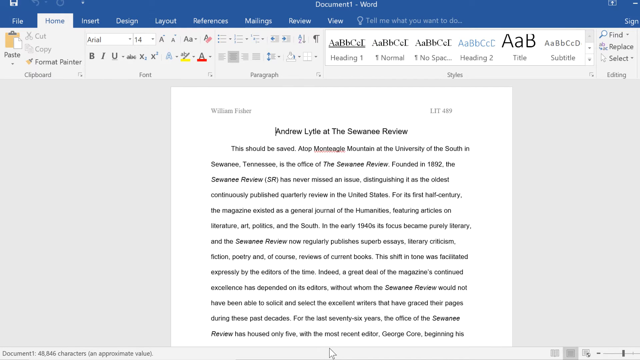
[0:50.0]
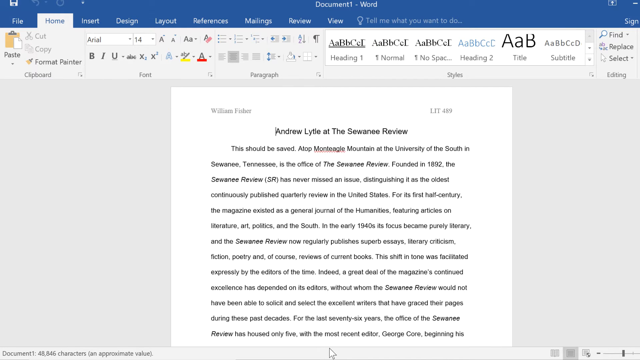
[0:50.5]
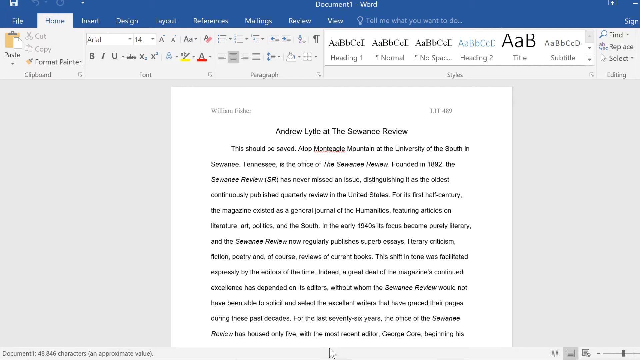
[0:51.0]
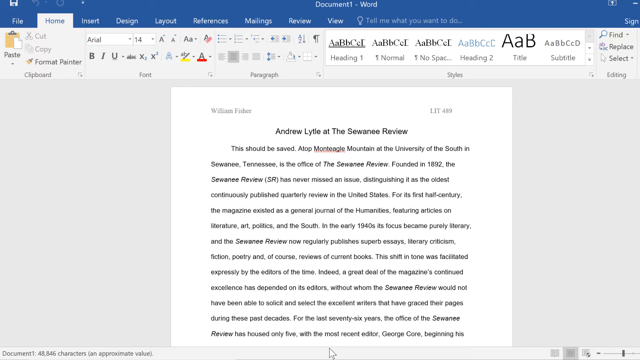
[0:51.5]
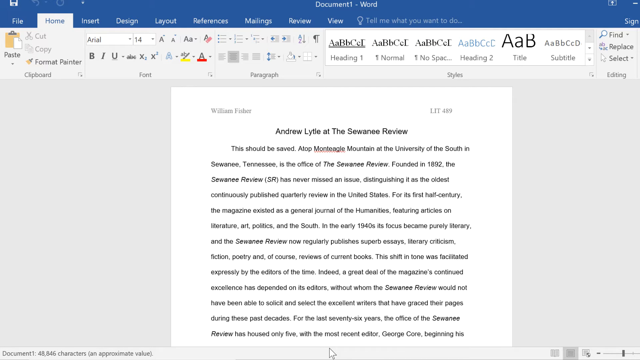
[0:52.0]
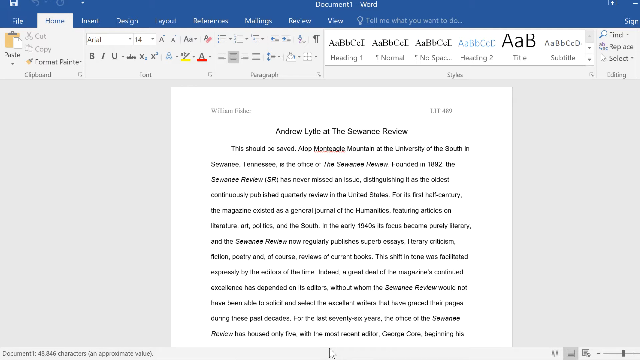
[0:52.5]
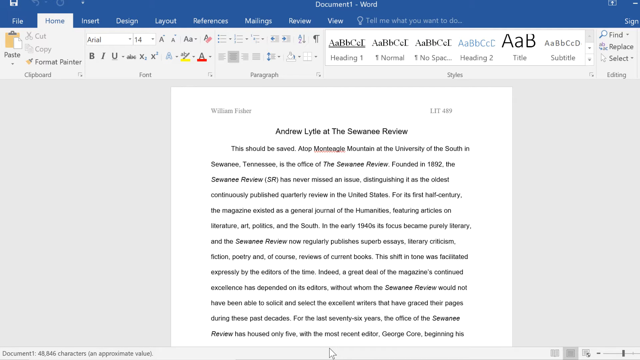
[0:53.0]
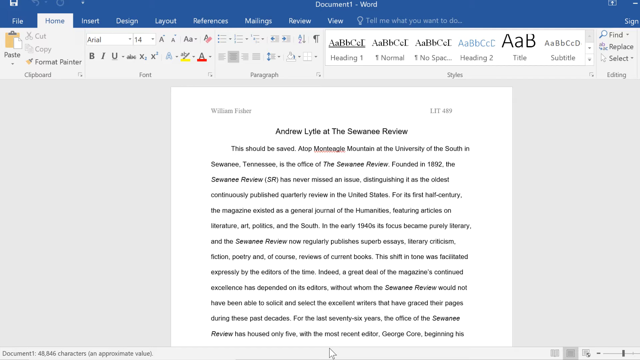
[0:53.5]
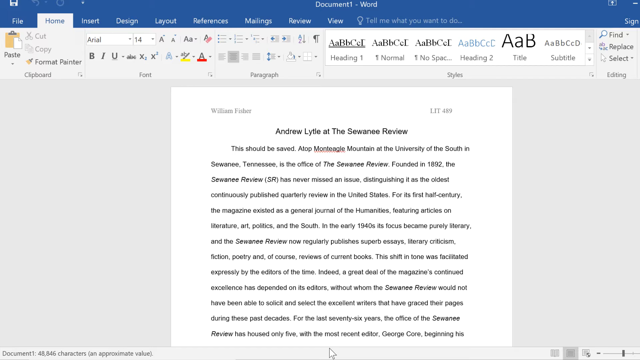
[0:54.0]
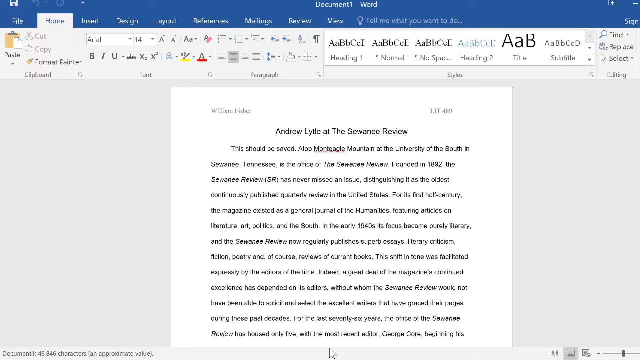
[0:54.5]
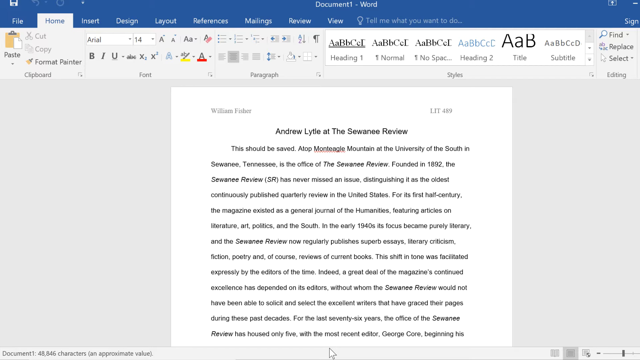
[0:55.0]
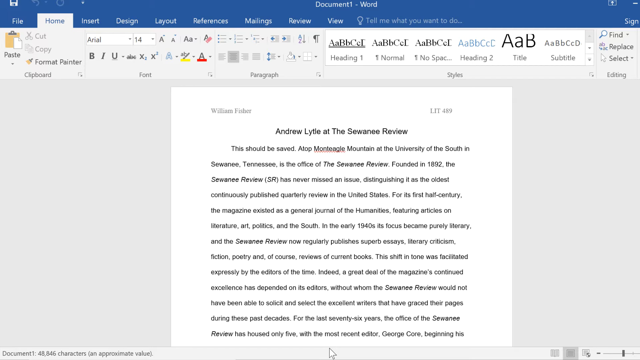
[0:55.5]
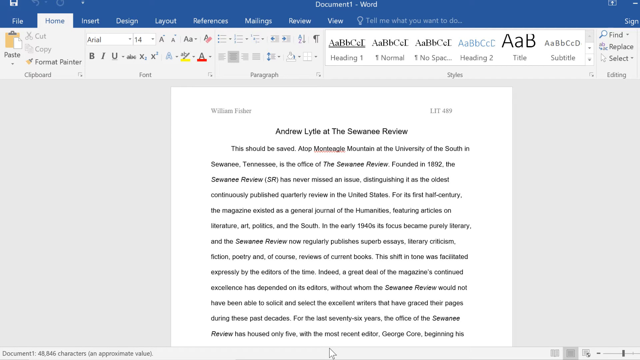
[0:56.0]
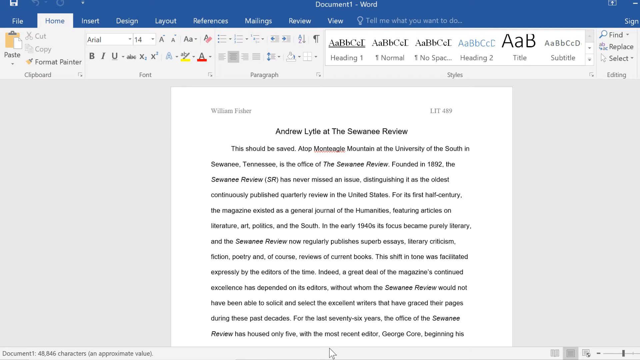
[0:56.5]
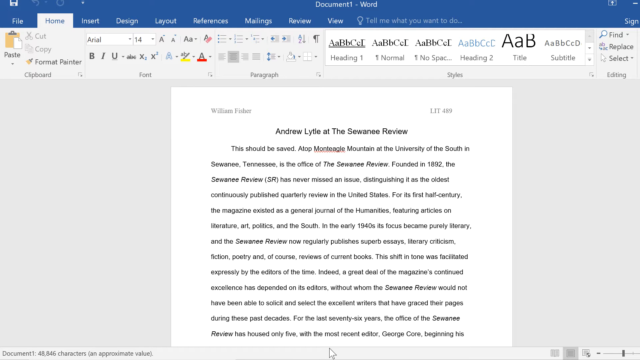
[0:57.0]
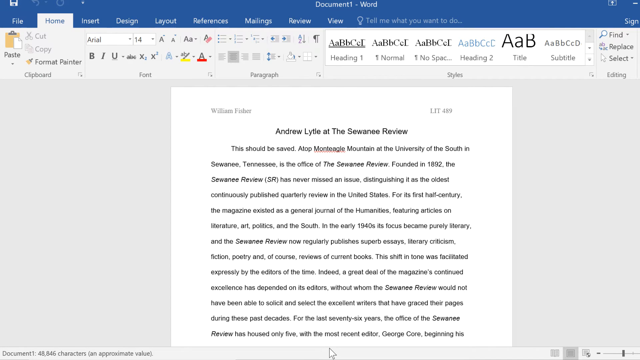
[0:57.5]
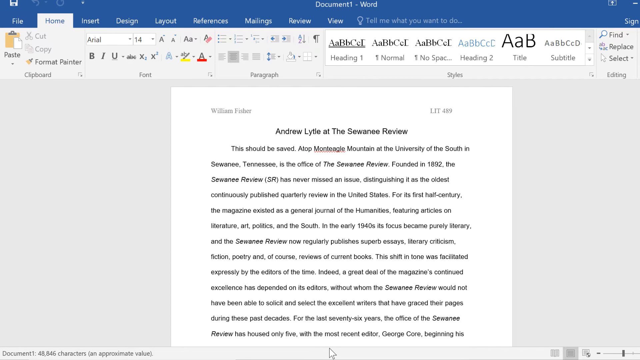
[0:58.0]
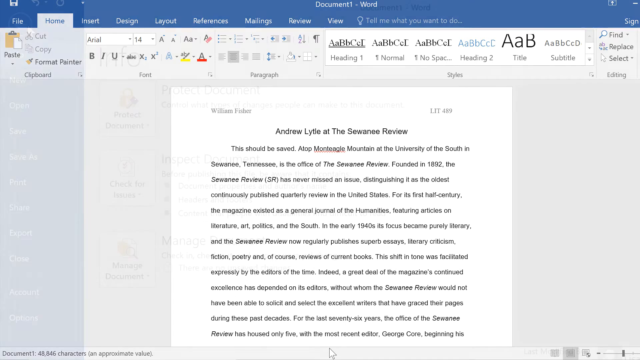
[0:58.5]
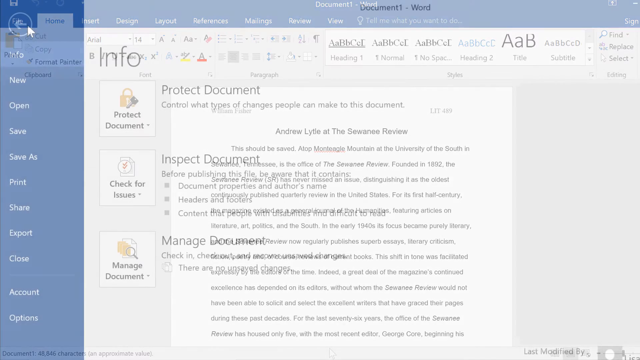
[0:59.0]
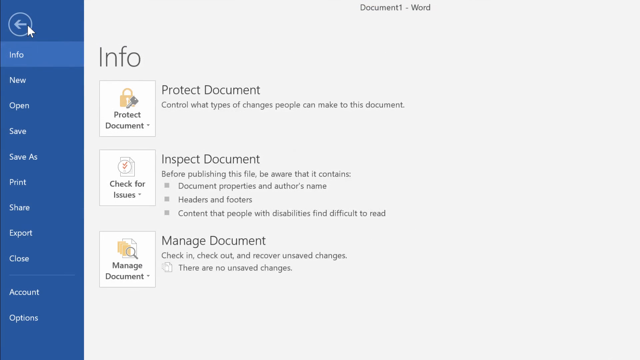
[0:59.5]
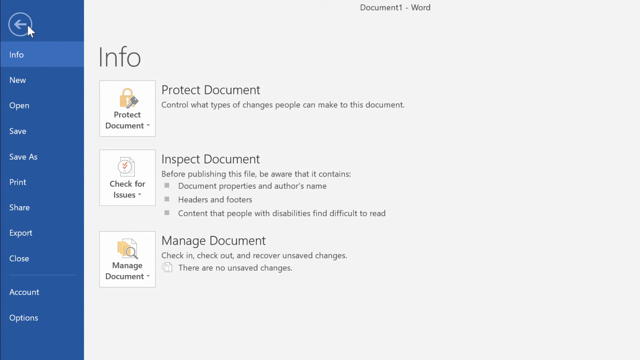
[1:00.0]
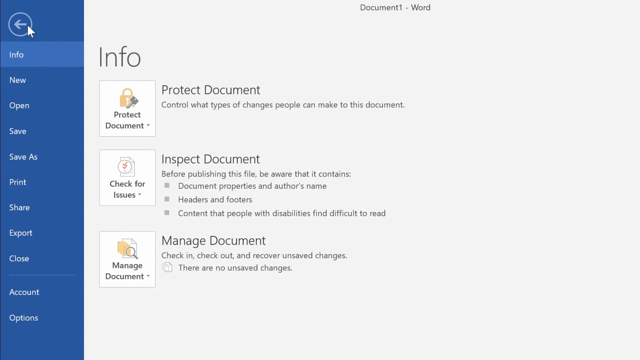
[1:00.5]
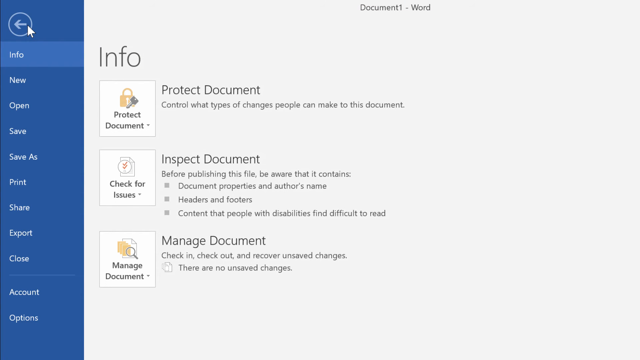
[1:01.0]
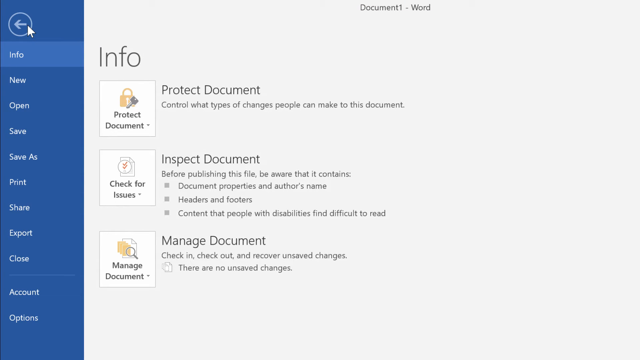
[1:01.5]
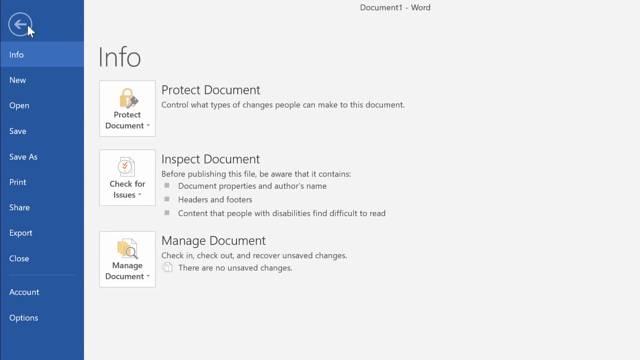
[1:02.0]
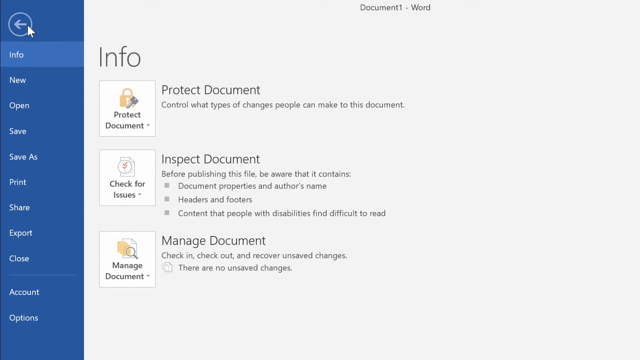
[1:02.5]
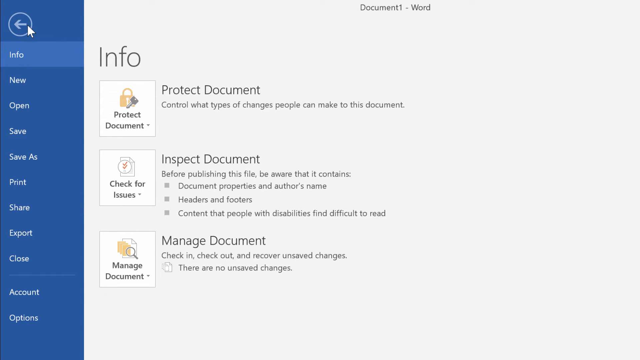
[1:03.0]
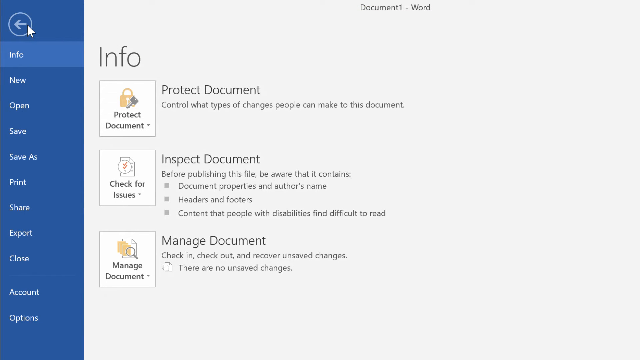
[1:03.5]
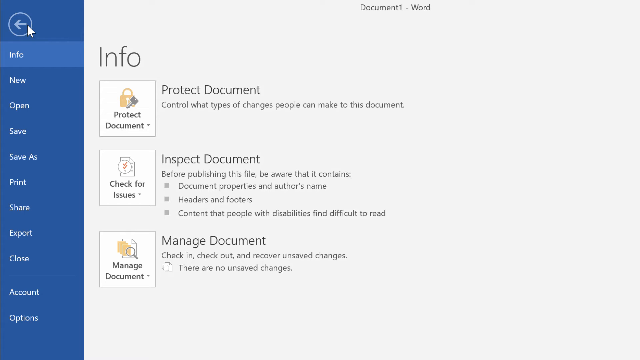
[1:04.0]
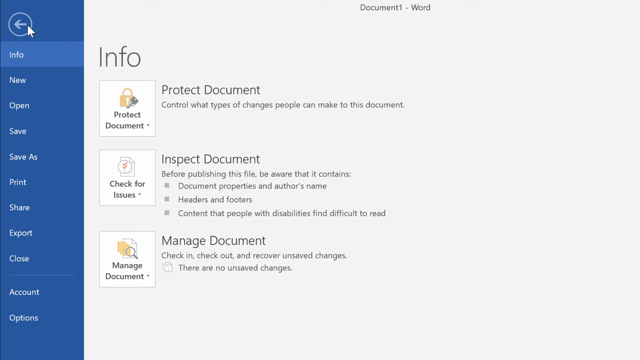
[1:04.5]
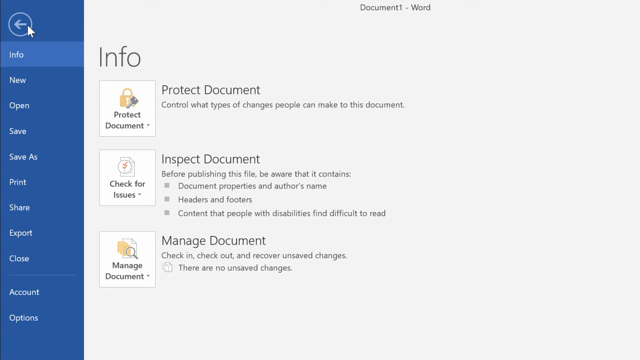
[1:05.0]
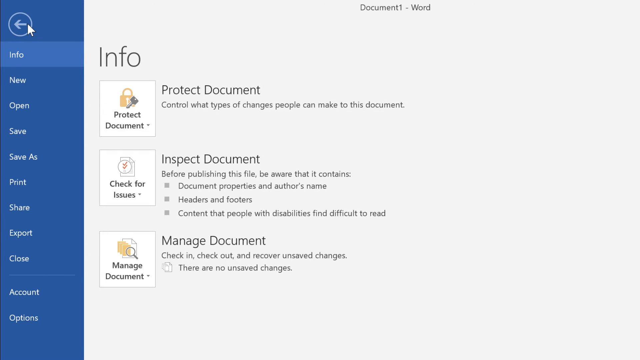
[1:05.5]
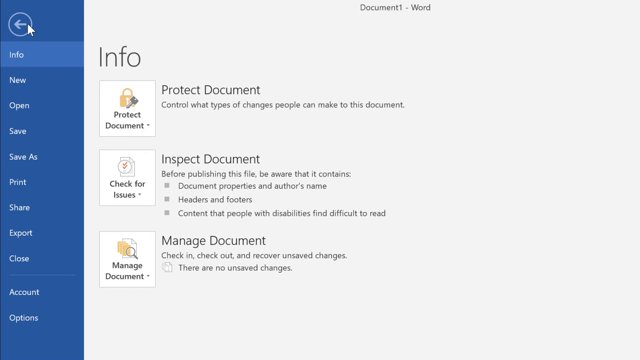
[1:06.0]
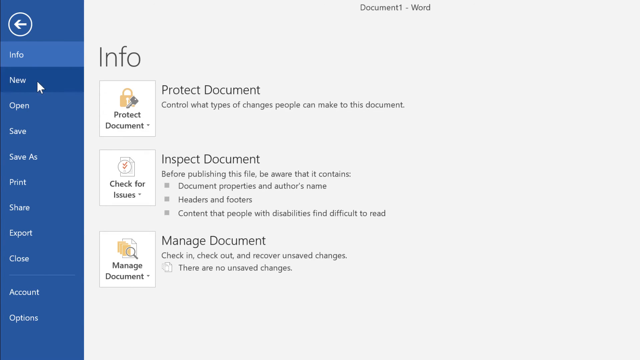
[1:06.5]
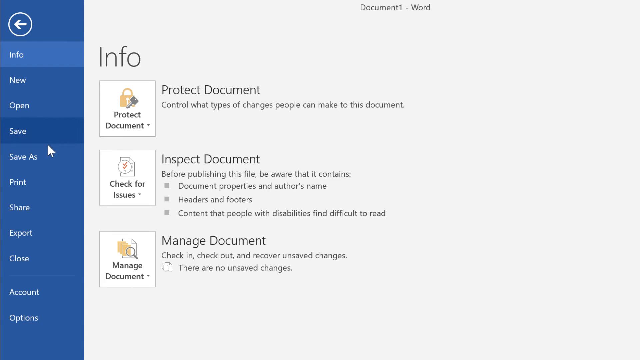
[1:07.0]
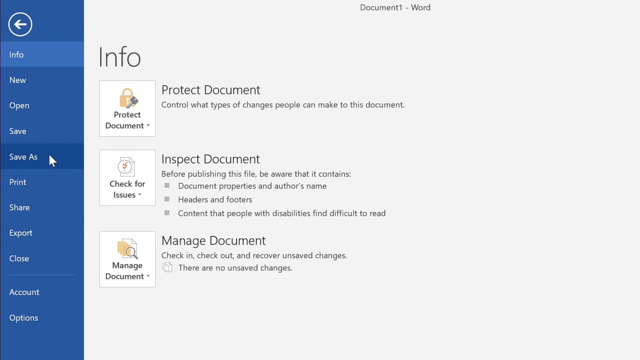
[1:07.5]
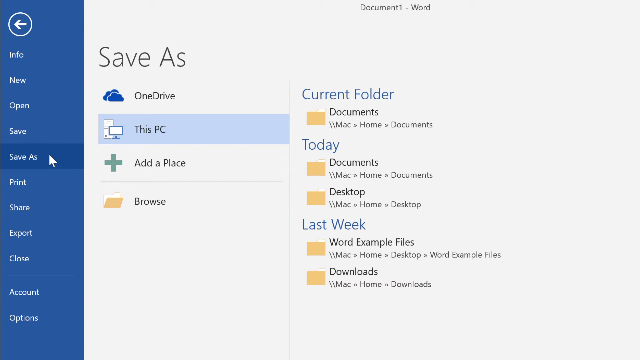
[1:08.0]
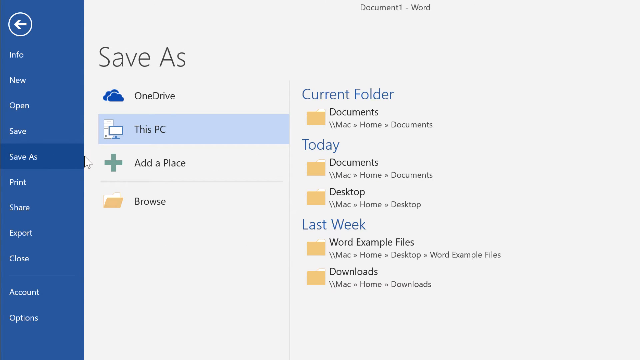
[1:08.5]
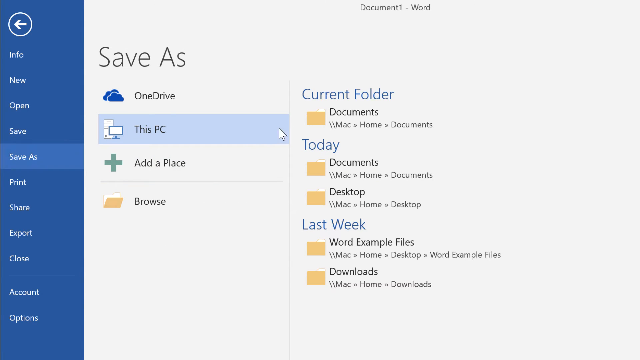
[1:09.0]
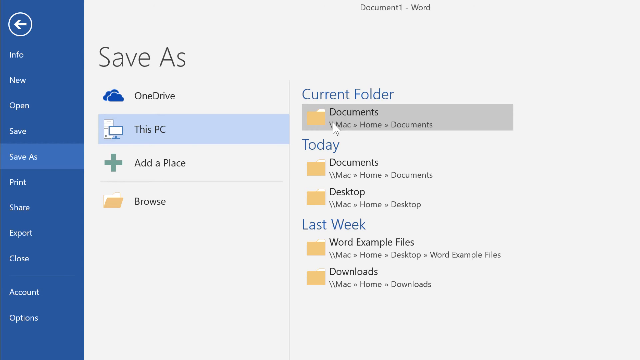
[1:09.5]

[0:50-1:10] Microsoft Word is open on a document titled "Andrew Little at the Sewanee Review," with the author William Fisher written in the upper left-hand corner of the document. The user has gone to Info and scrolls down to Save As, then chooses to save on This PC.